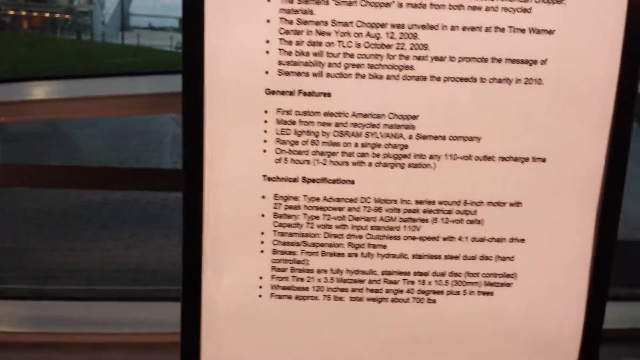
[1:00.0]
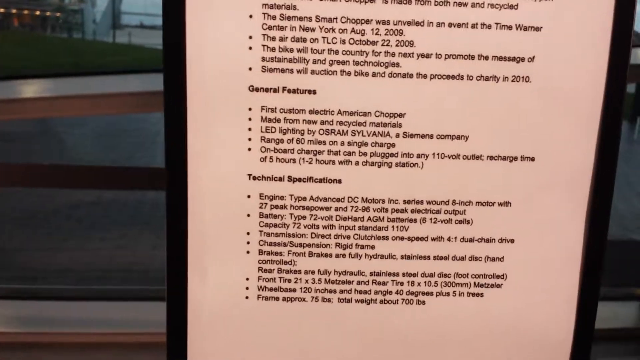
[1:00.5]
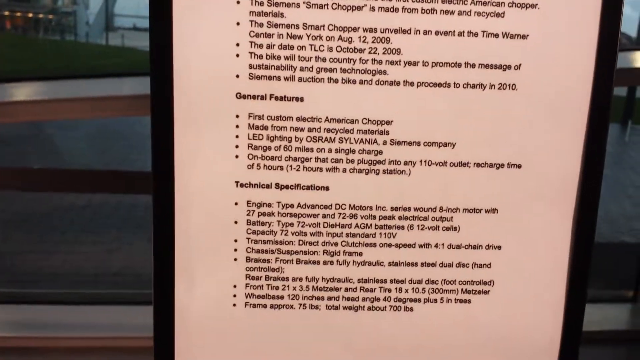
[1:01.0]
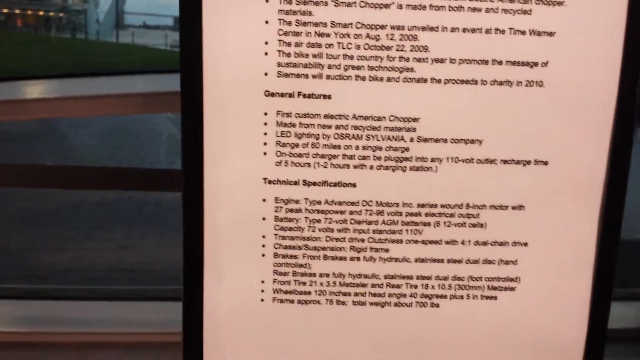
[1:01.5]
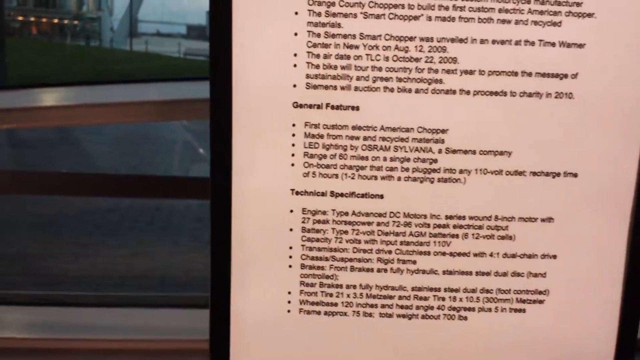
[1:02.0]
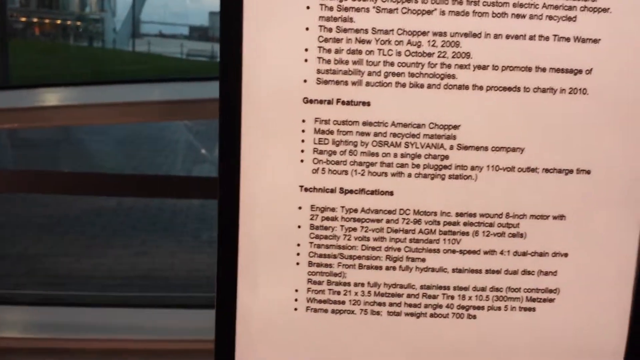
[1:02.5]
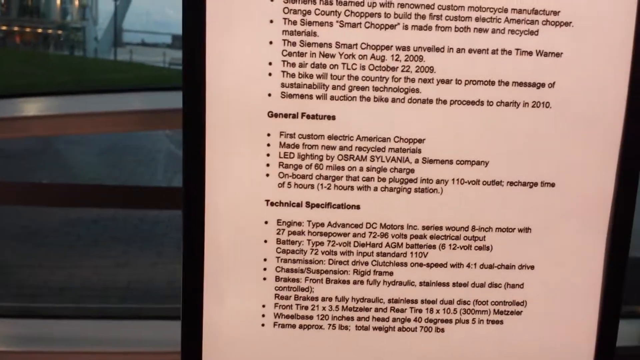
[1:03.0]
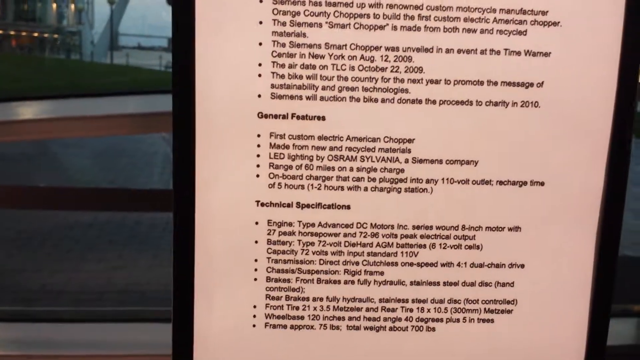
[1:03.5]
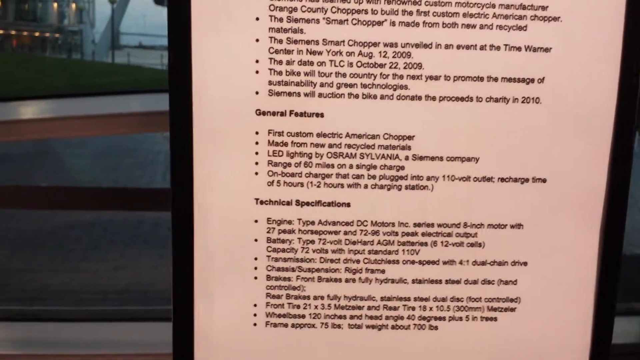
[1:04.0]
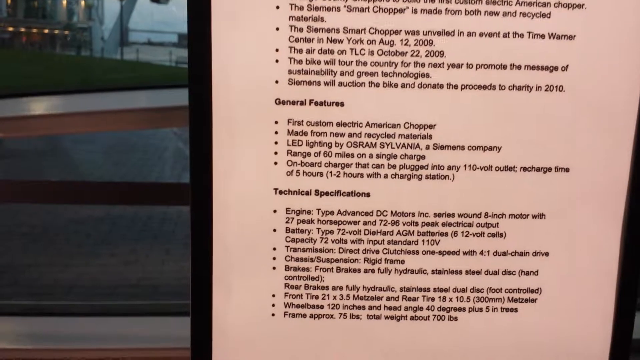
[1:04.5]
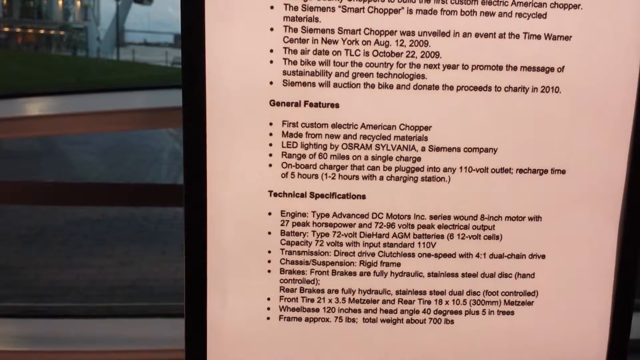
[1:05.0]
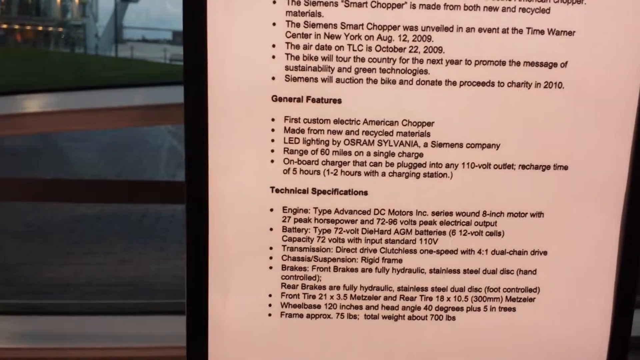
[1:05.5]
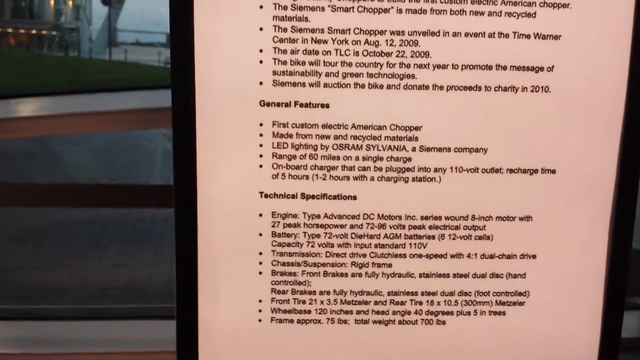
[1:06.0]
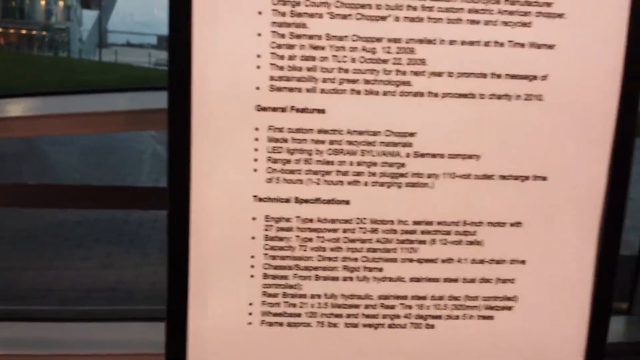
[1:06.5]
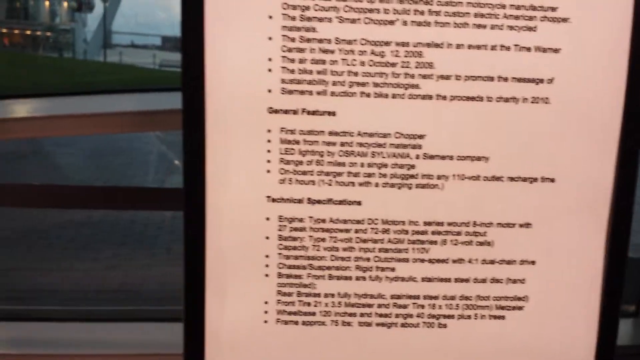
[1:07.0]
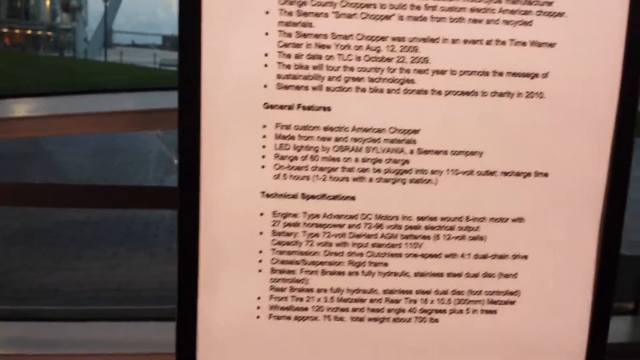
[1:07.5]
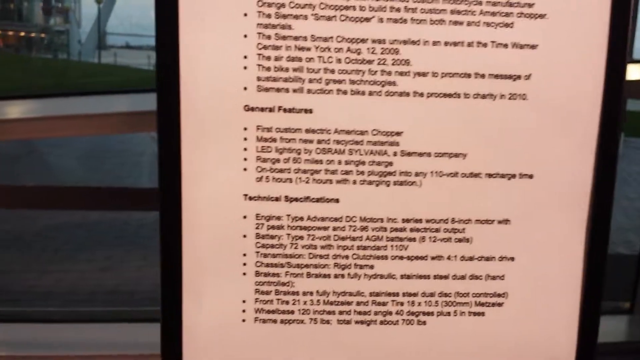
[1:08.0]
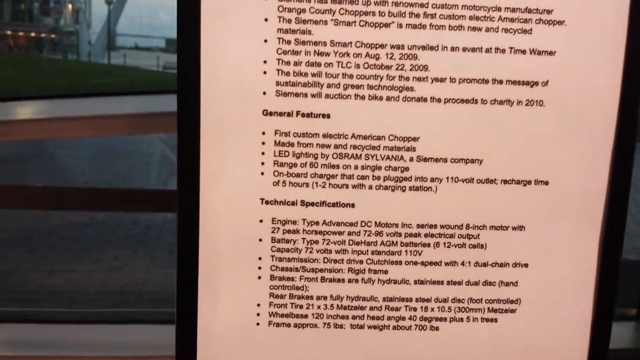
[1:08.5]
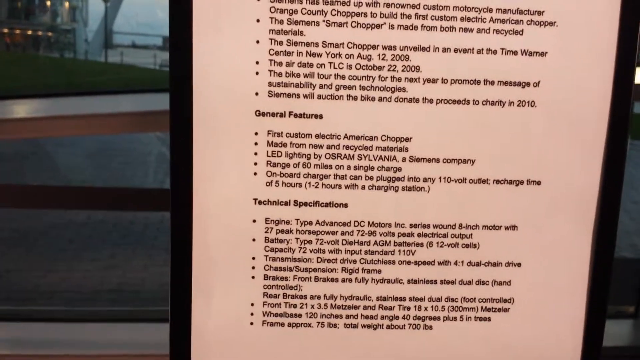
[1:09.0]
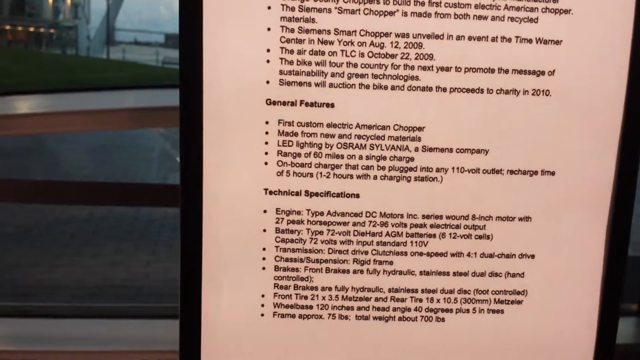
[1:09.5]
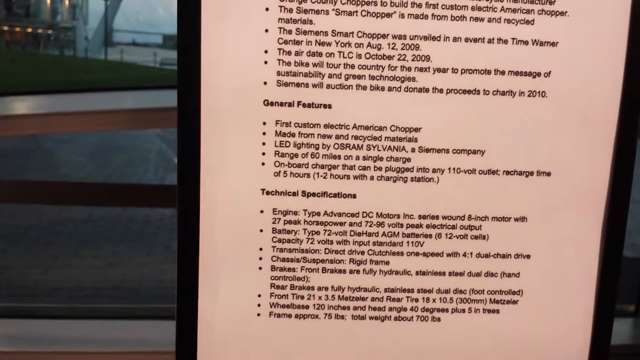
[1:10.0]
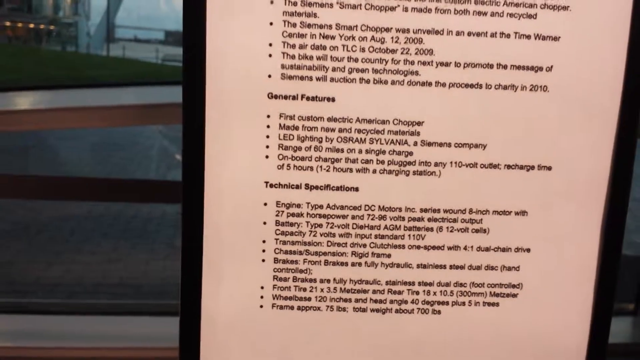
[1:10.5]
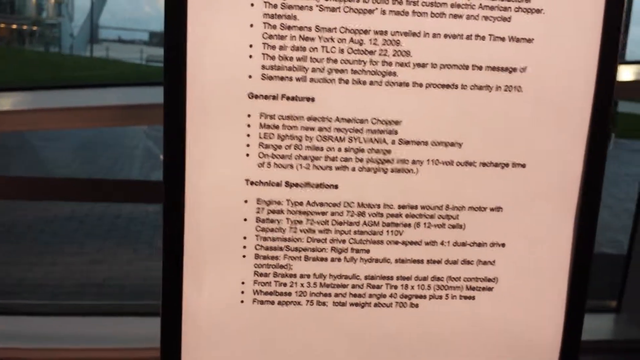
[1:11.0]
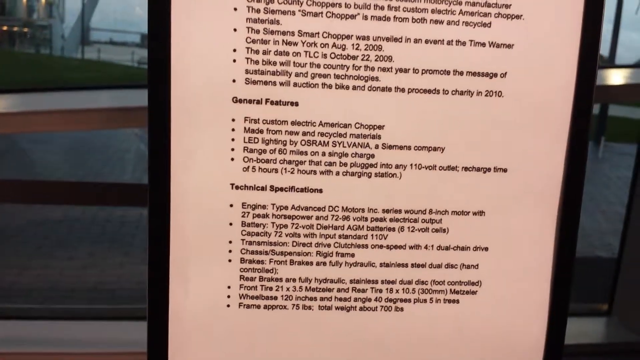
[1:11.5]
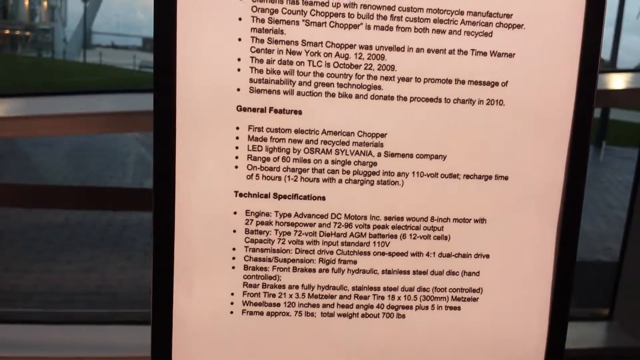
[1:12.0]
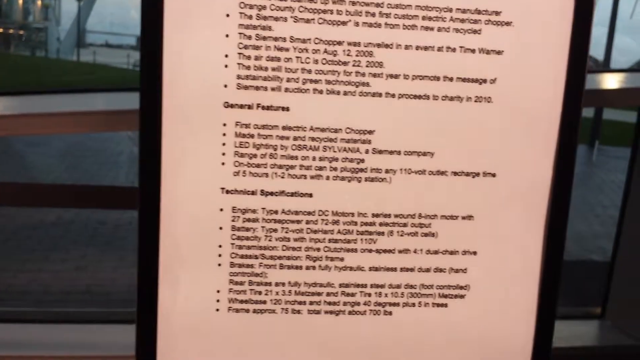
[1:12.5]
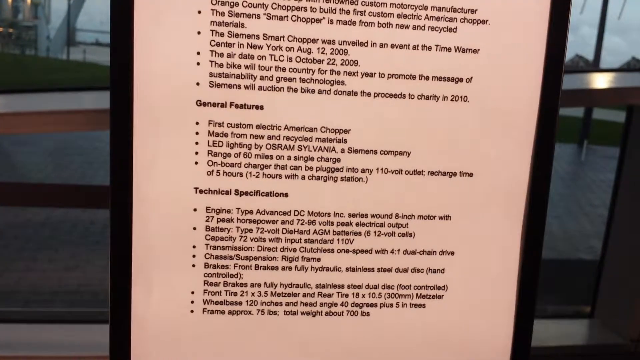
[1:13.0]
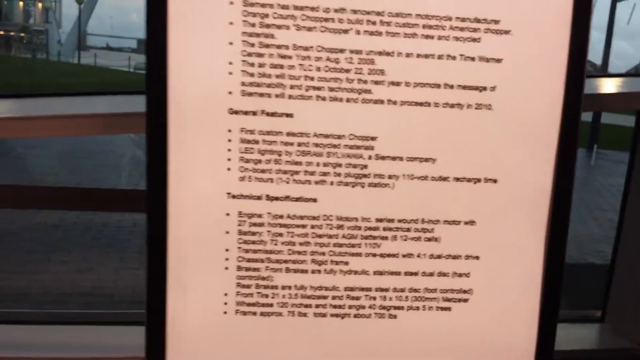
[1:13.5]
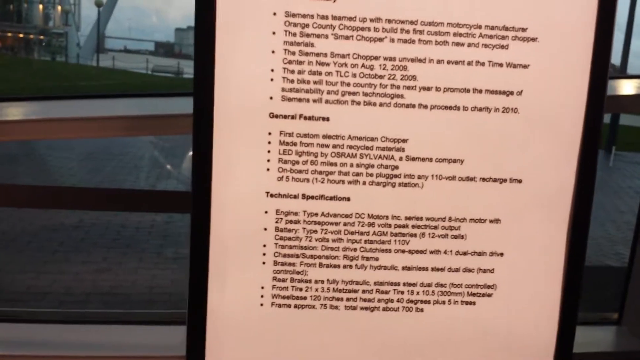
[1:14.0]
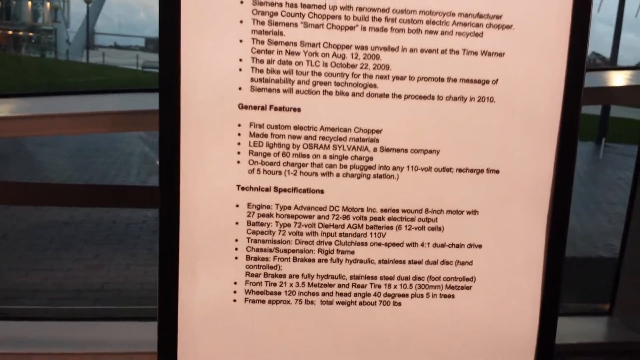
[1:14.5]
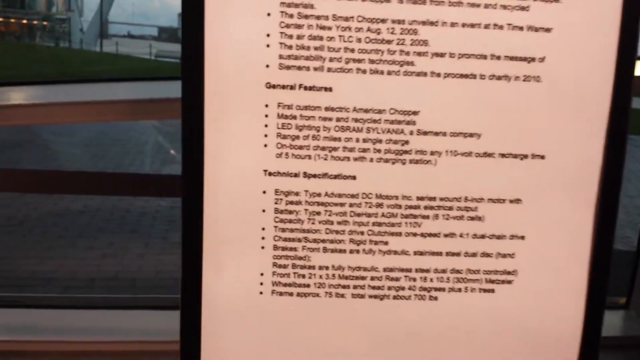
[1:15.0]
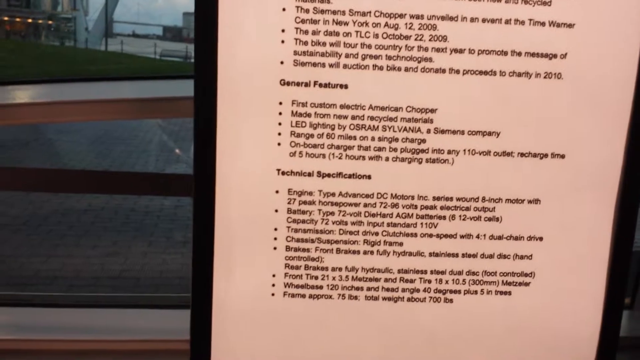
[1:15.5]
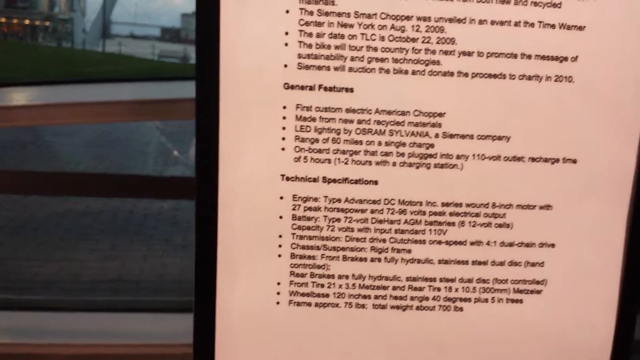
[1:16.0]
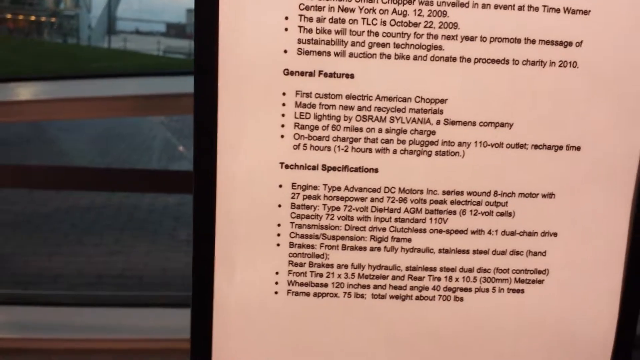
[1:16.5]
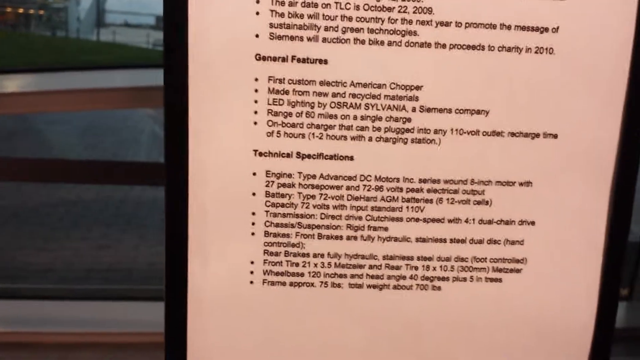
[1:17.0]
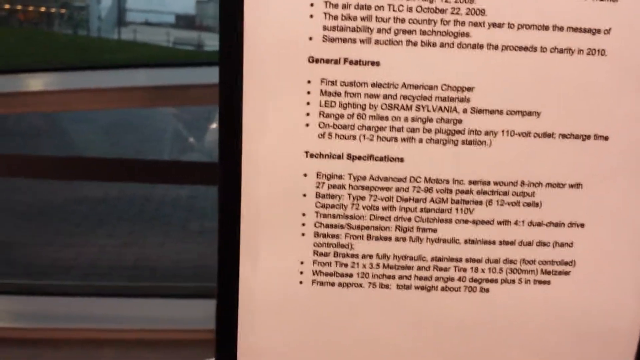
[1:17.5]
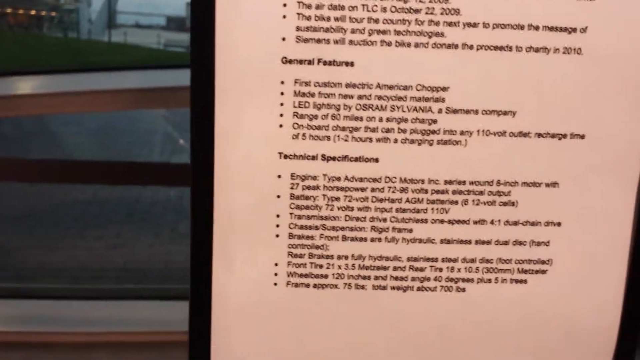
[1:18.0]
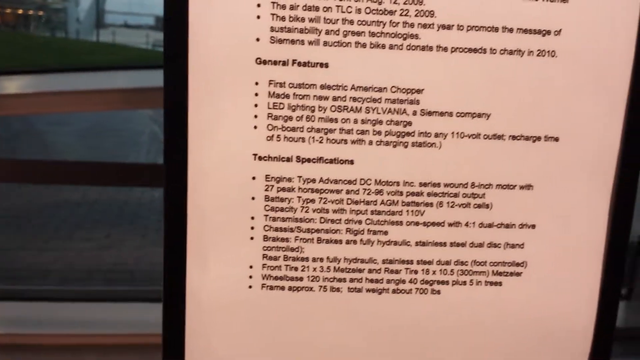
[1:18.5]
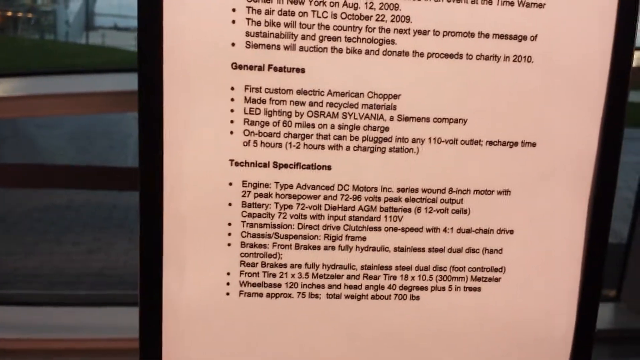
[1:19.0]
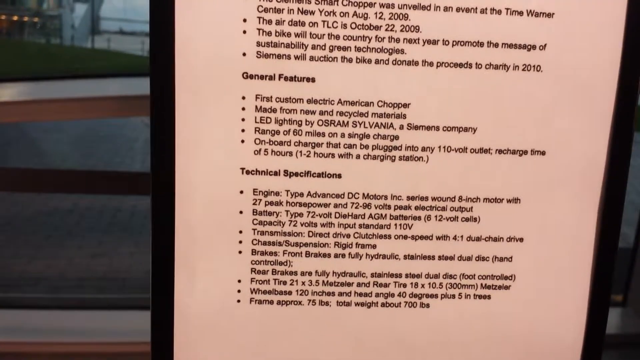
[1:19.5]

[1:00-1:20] A framed white piece of paper with black text has a black frame all the way around it. It has three sections, and only the bottom two are fully visible. The second section, titled "General Features", has five bullet points: the first custom electric American chopper, that it is made from new and recycled materials, that the LED lighting was from Sylvania, a range of 60 miles on a single charge, and an onboard charger that can be plugged into any 110 volt outlet. The next section lists specifications: the engine type, DC motors; the battery type, a 72 volt die-hard battery; the transmission, a direct drive clutchless one speed; the chassis and suspension; the front and rear brakes; the sizes of the front and rear tires; the wheelbase; and the weight of the frame.